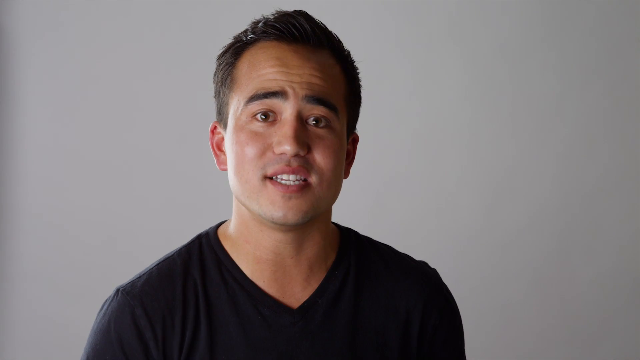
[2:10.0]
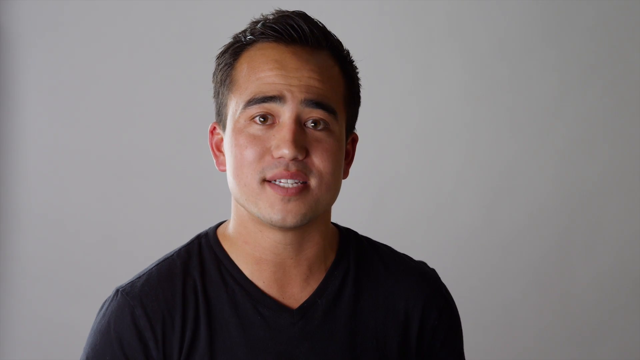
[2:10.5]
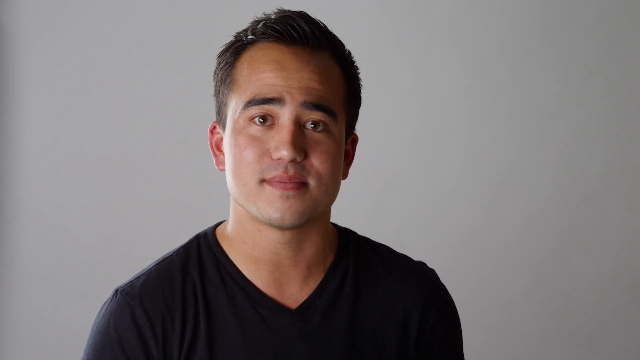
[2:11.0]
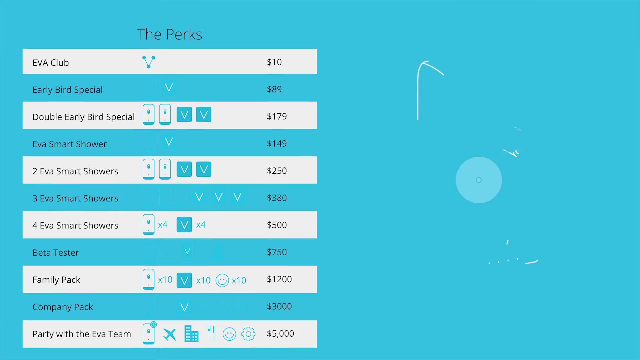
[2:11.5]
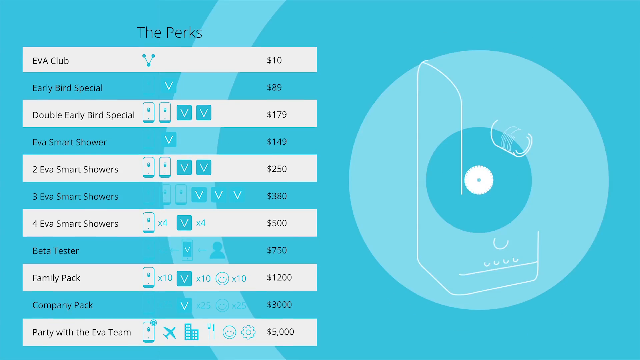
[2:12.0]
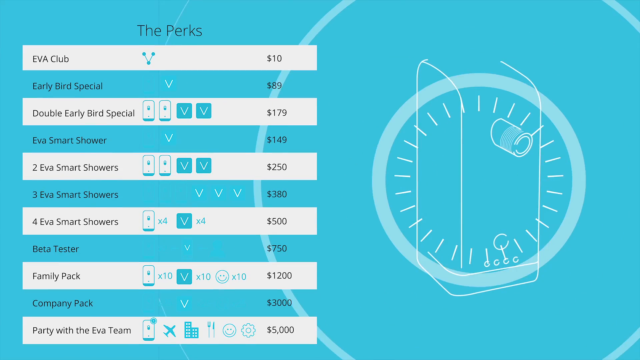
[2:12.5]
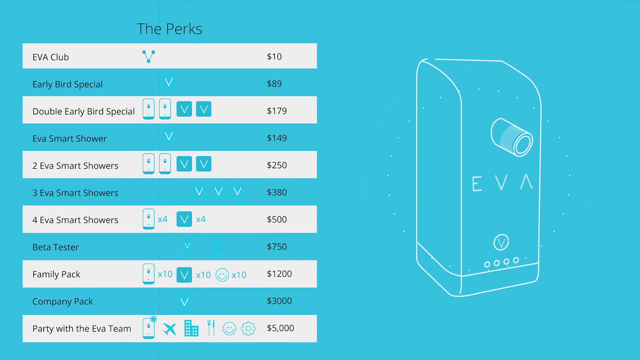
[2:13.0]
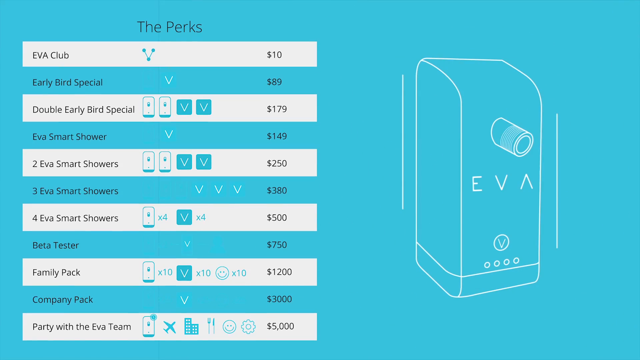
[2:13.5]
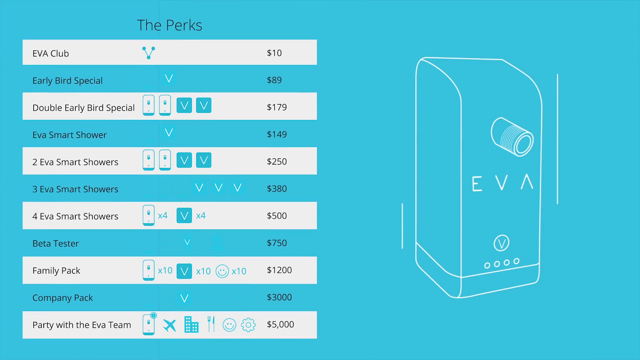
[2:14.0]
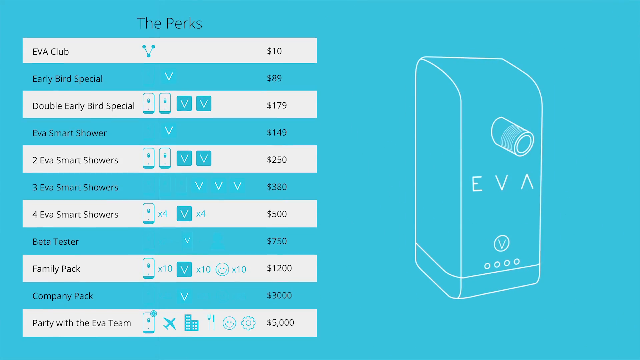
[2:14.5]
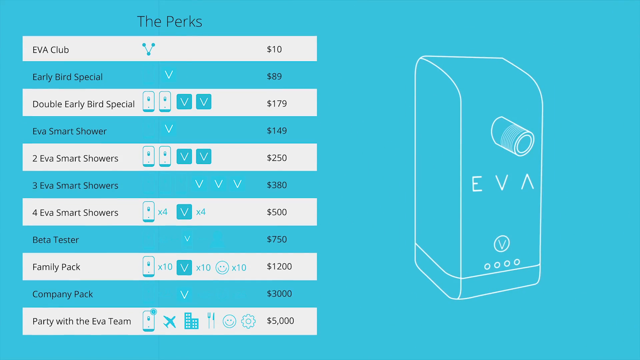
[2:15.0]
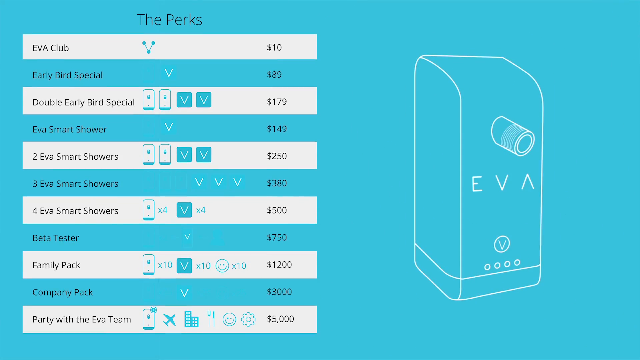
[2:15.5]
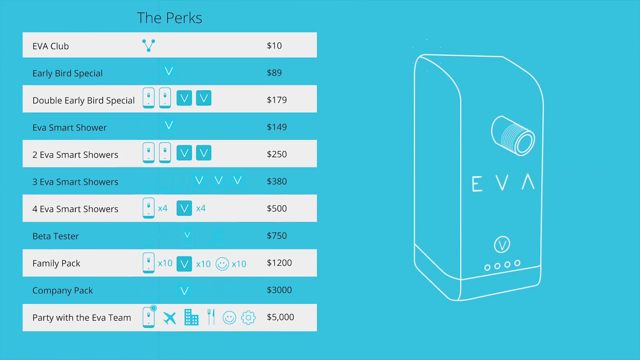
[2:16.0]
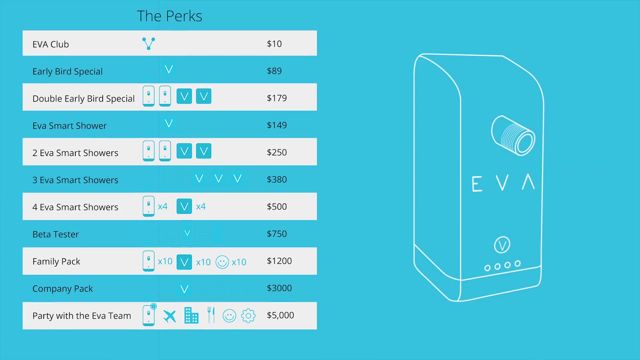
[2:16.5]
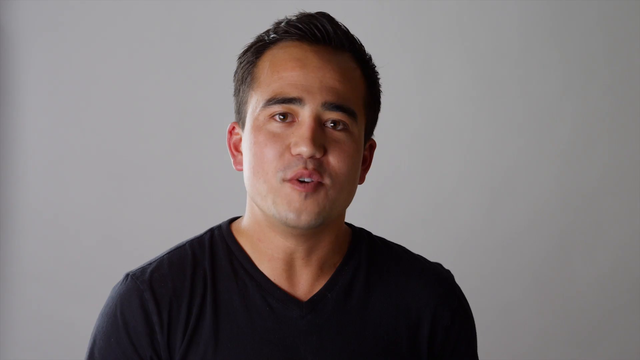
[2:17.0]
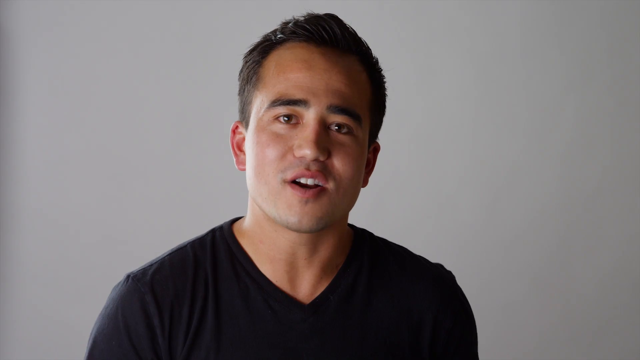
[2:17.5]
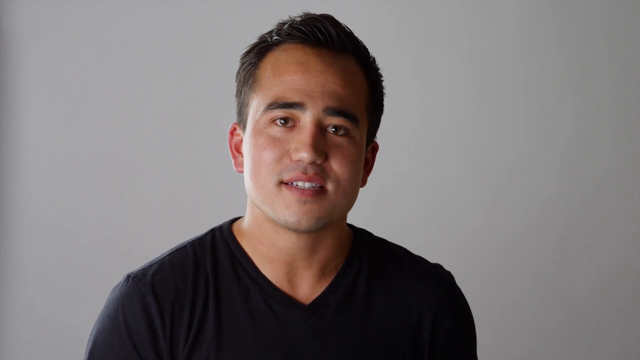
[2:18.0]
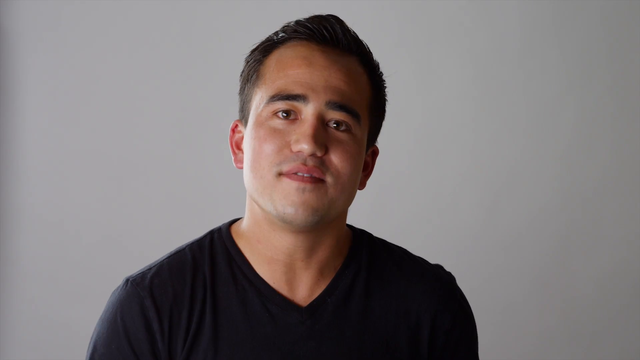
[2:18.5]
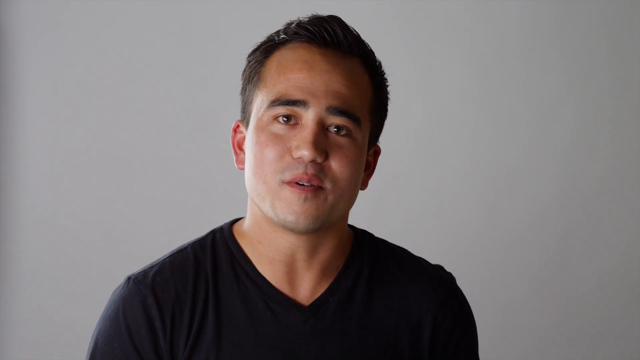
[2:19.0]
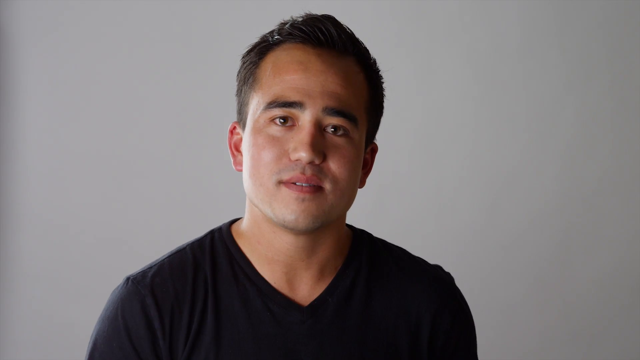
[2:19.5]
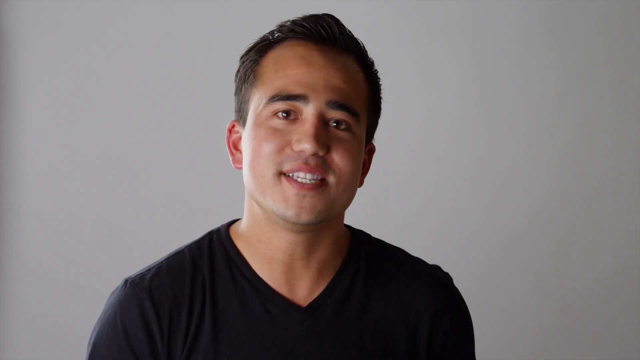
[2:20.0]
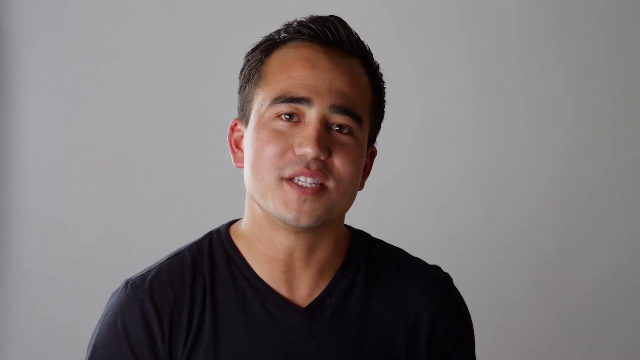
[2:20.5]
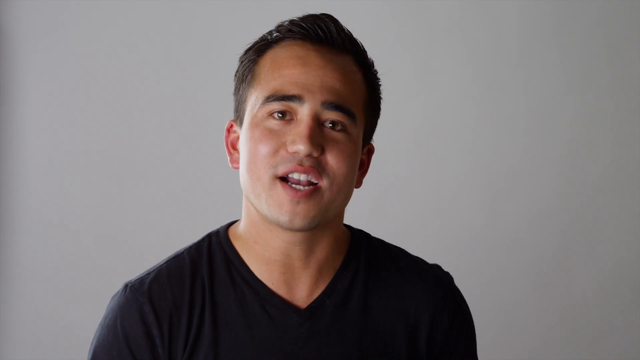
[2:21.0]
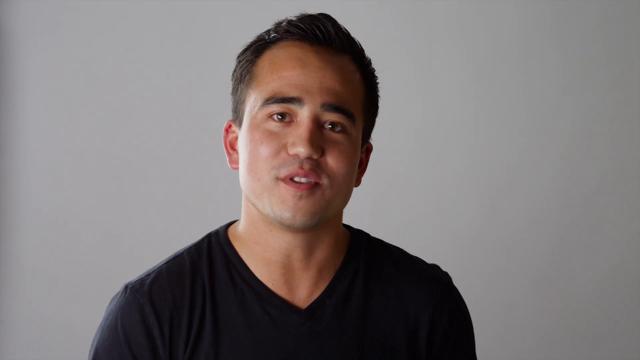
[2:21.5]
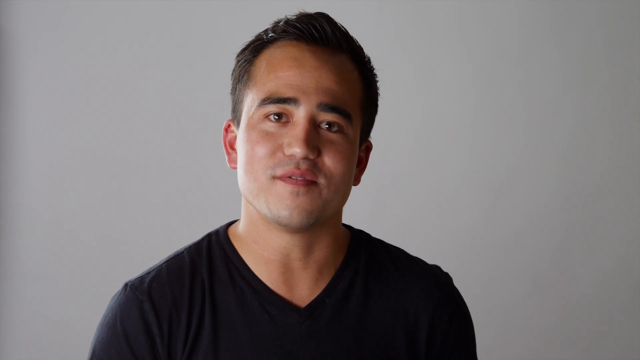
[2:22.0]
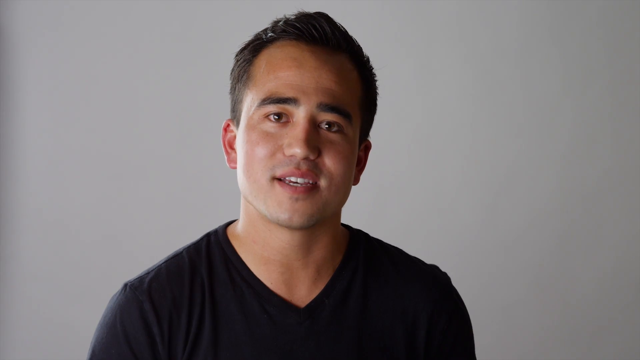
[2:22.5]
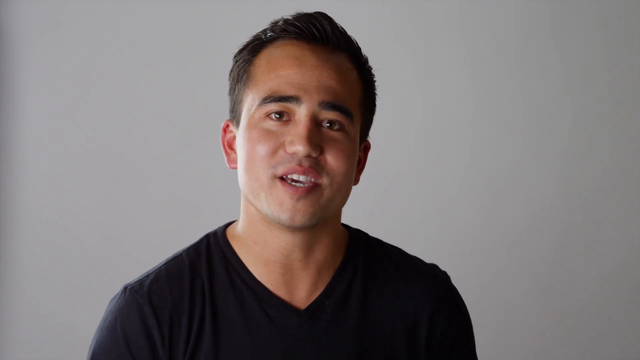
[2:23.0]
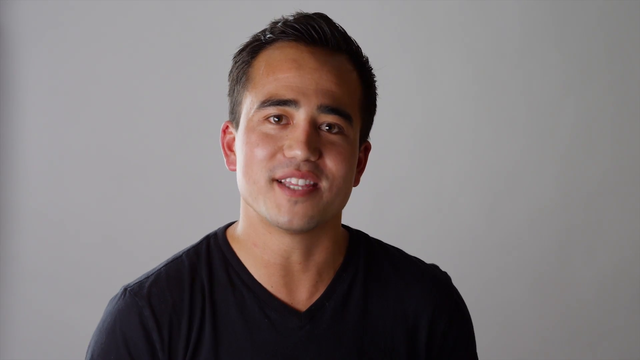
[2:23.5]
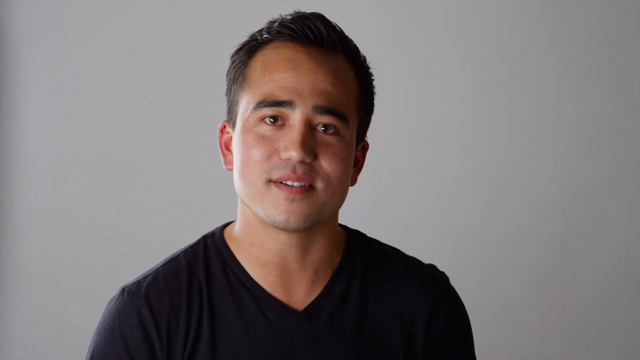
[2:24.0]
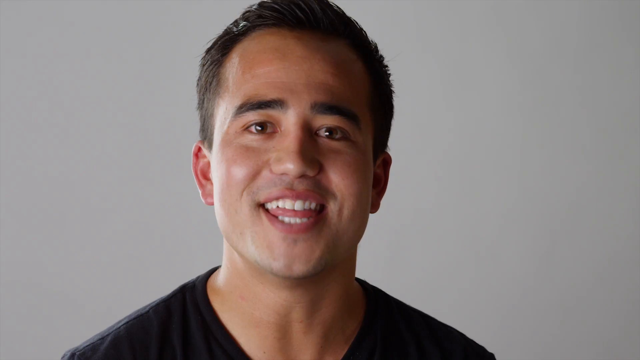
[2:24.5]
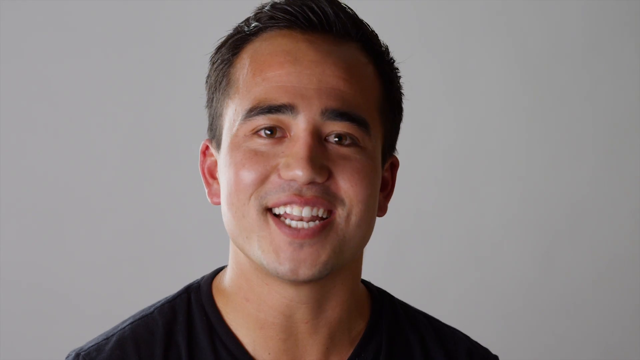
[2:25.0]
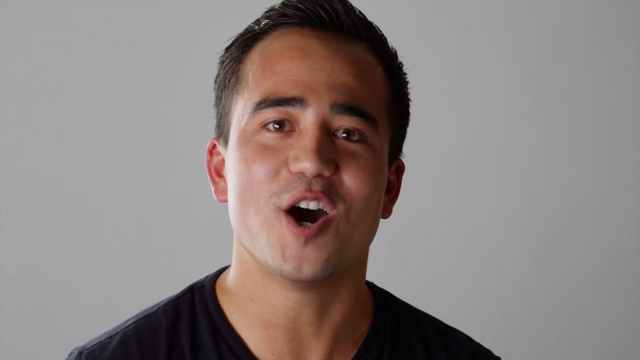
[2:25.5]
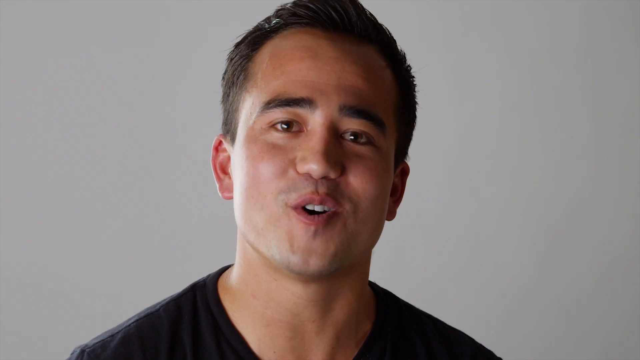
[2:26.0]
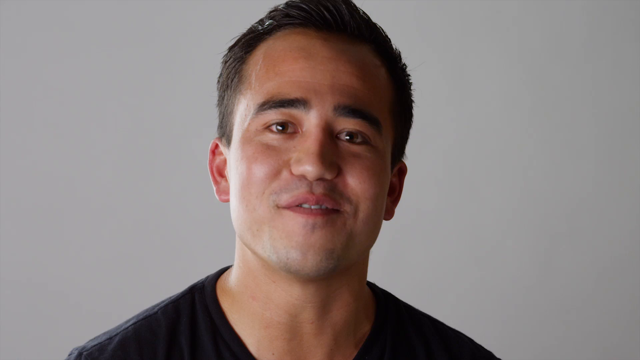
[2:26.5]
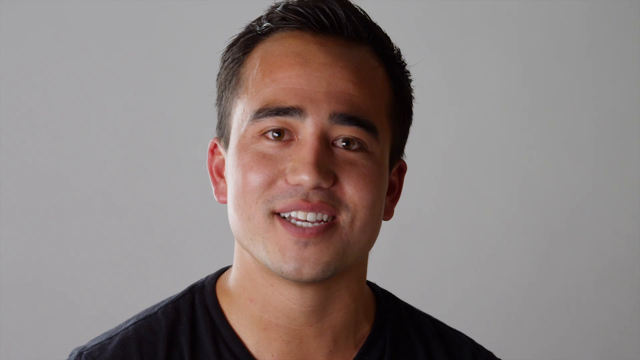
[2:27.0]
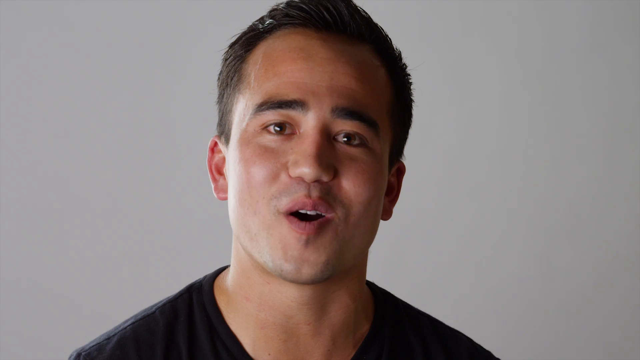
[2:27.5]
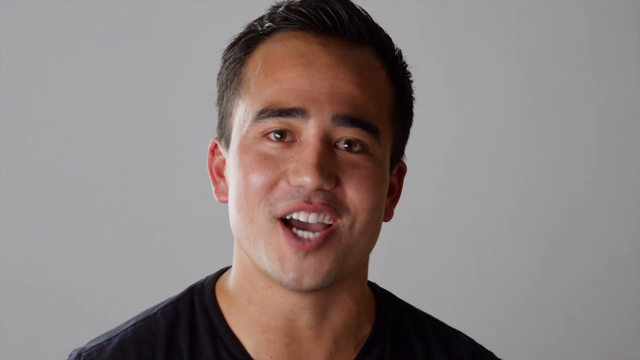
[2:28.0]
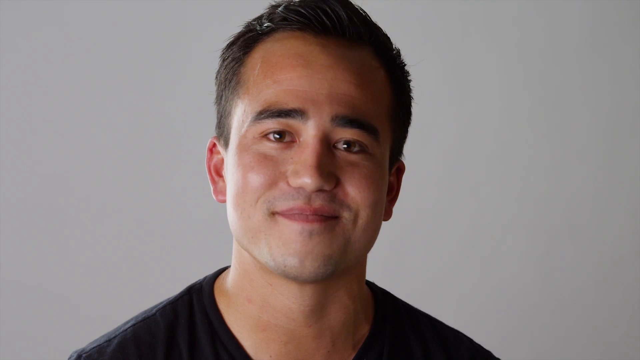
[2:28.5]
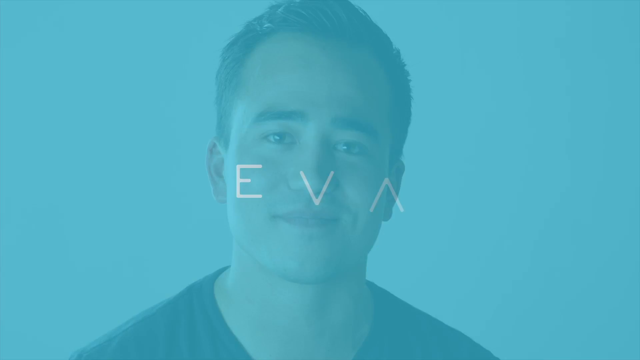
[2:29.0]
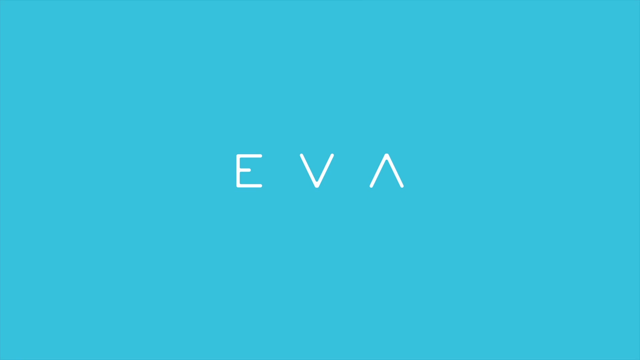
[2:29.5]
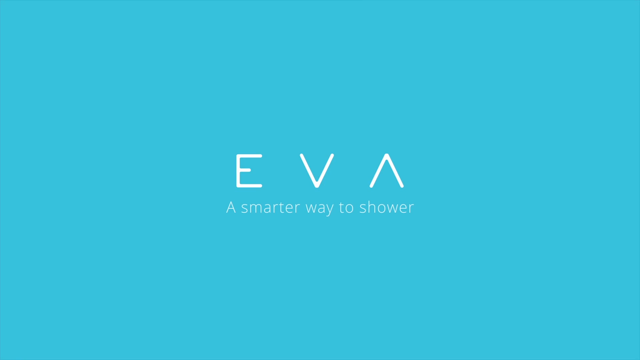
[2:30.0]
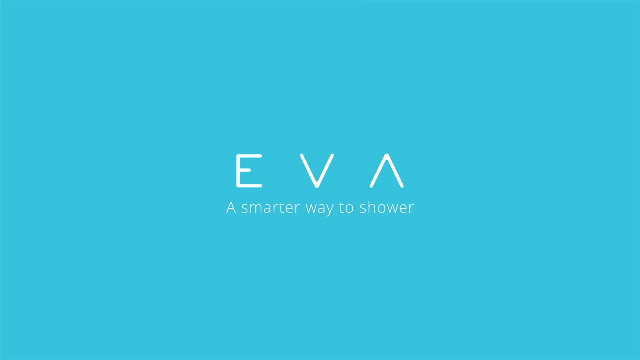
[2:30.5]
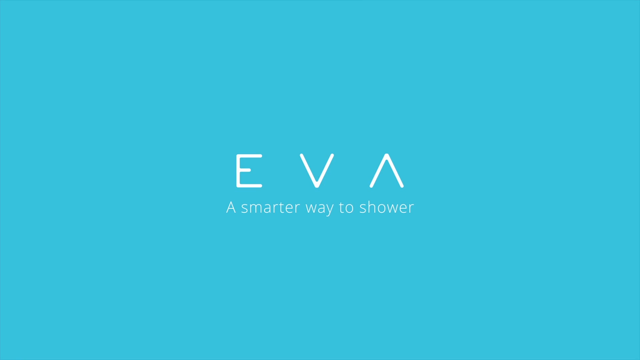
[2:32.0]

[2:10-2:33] A young man talks directly to the camera. He is probably in his twenties, has medium-length black hair, is clean shaven, appears to be Caucasian, and wears a black t-shirt; the background is grey. After he speaks for a few seconds, text appears stating "the perks", followed by a number of rows, each naming an item with a corresponding value: "Eva Club" at $10, "Early Bird Special" at $89, "Double Early Bird Special" at $179, "Eva Smart Shower" at $149, "Two Eva Smart Showers" at $250, and further rows. The video then goes back to the man, who continues to speak facing the camera and staring in that direction. The video zooms to a closer view of him, and finally the text "Eva a smarter way to shower" appears.